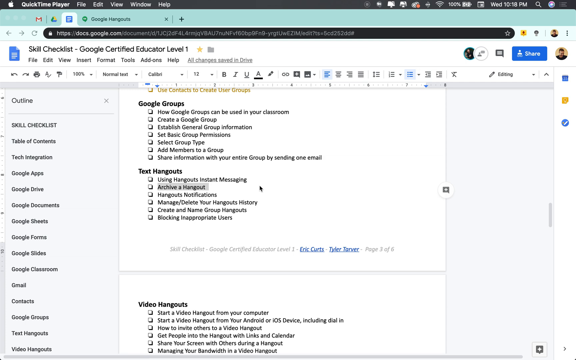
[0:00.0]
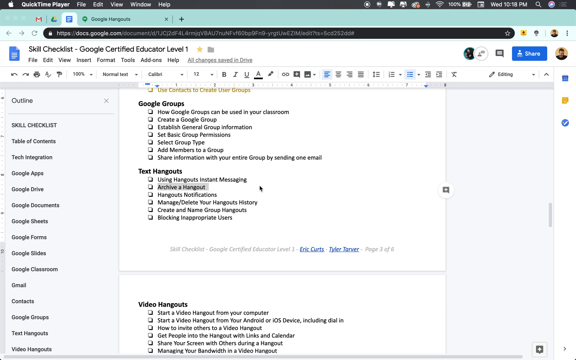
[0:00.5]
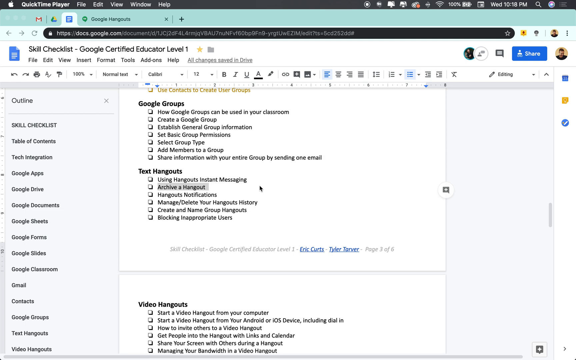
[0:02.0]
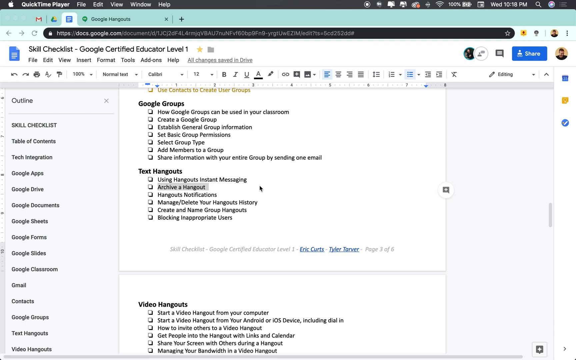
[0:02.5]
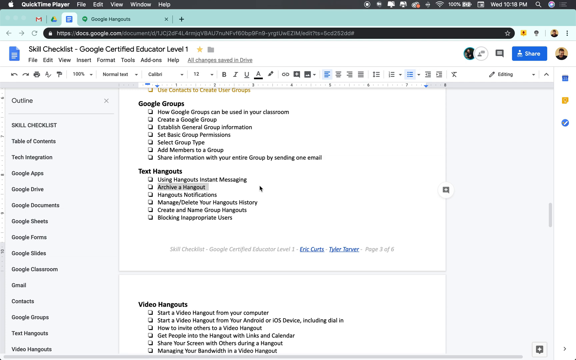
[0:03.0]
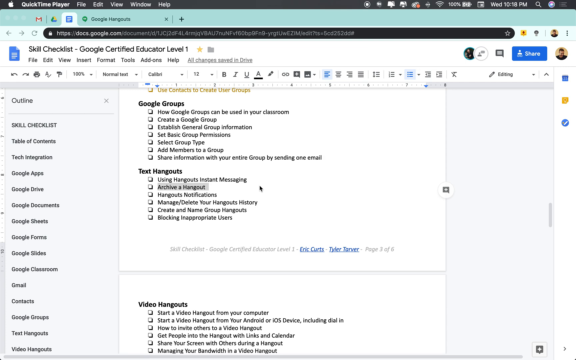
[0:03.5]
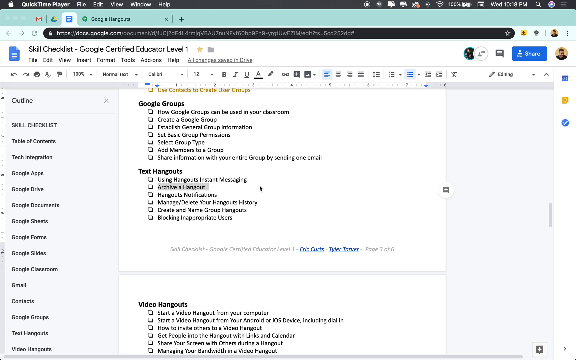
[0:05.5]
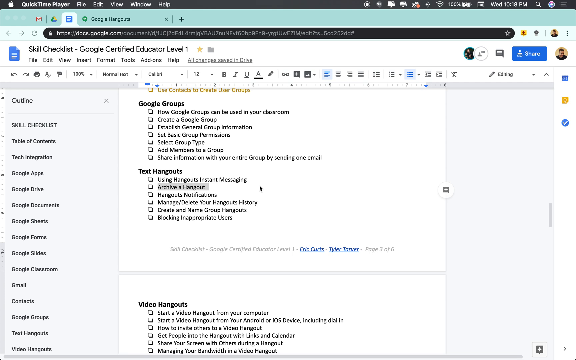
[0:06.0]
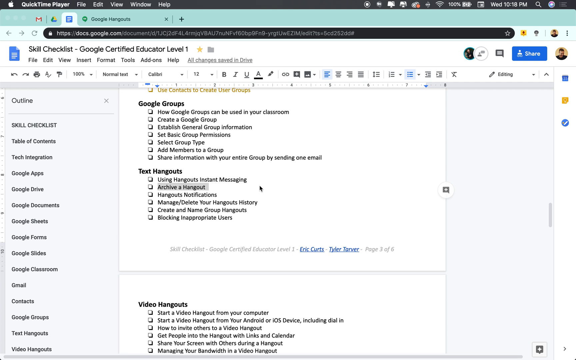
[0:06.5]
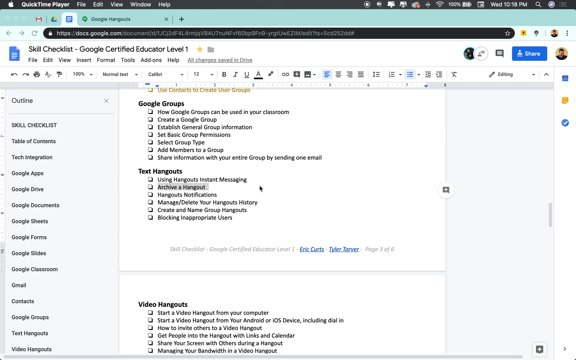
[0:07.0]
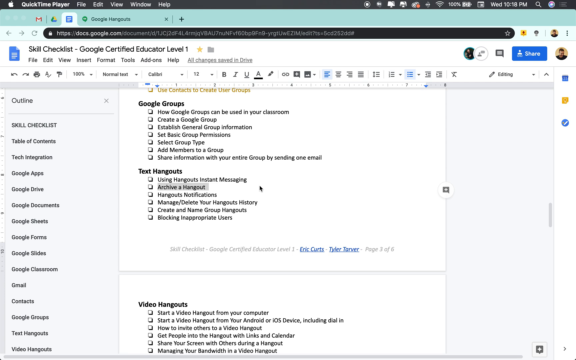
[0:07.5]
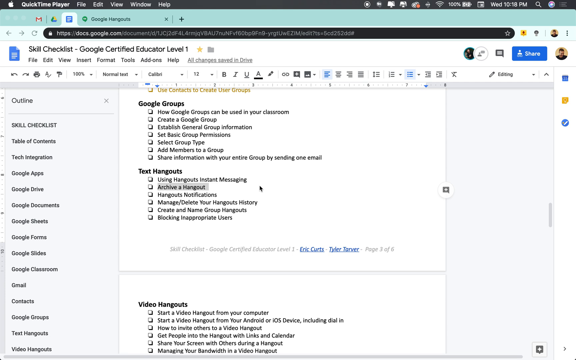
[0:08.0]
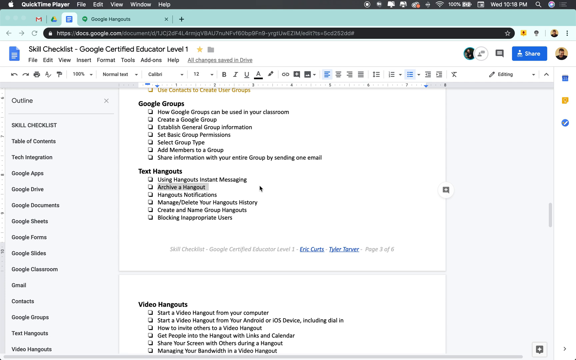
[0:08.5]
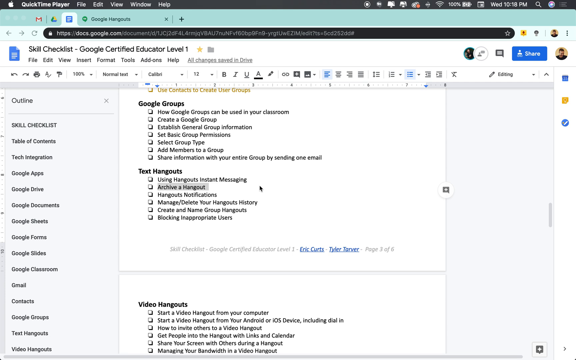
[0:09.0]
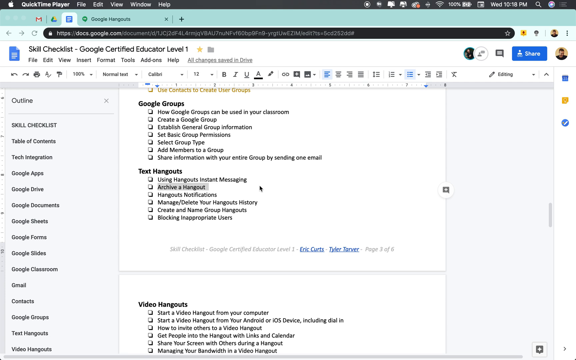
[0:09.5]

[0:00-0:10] A Google Docs page is on screen, with the URL "docs.Google" visible at the top. On the right is a very blurry profile picture that looks like a man's head looking to the right, with short brown hair and a black shirt. Another individual has joined the view, shown by a green circle to the left of the share button. The page is broken down into multiple small sections; the left side reads "outline, skill checklist, table of contents, tech integration, Google apps, Google Drive, Google documents" and so on. The main page holds many small checklists: a "Google groups" section with seven checkboxes below it, then "text hangouts" with six below it, then "video hangouts" with five below it.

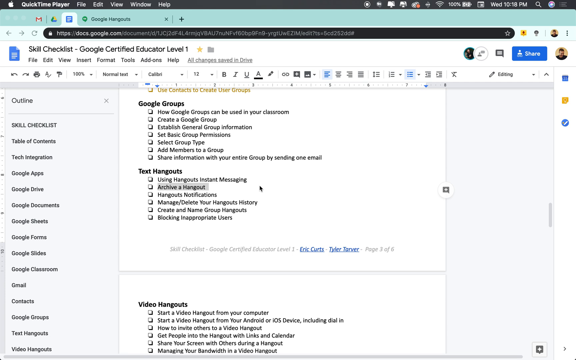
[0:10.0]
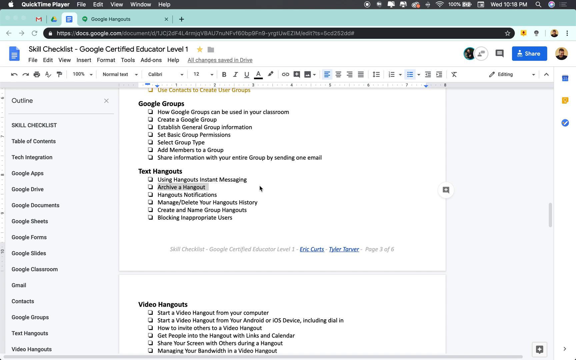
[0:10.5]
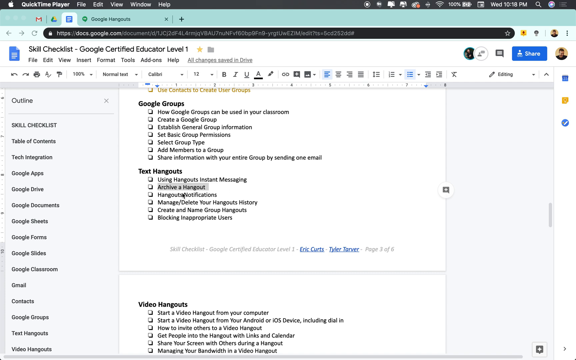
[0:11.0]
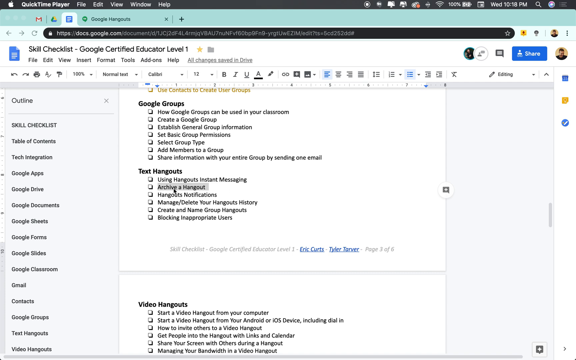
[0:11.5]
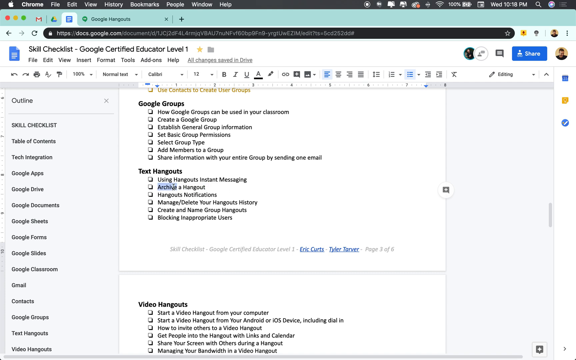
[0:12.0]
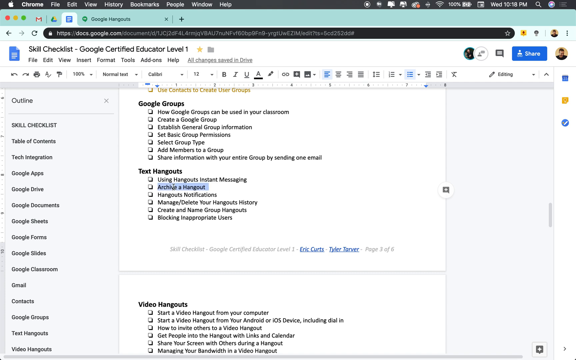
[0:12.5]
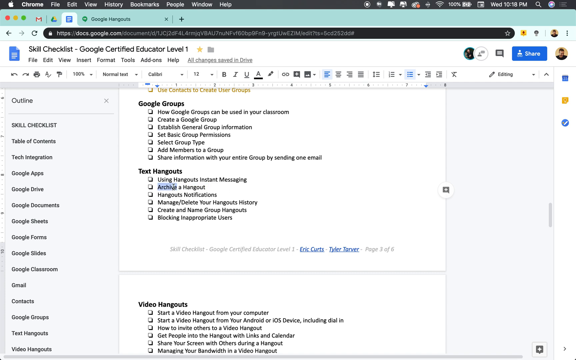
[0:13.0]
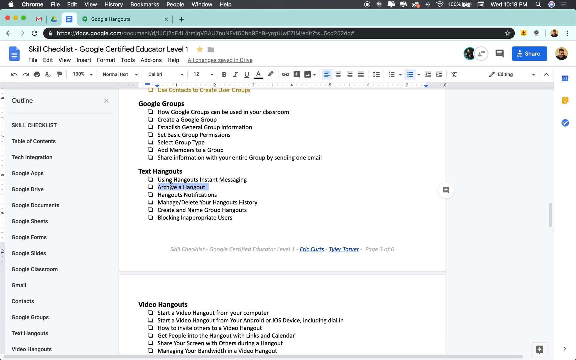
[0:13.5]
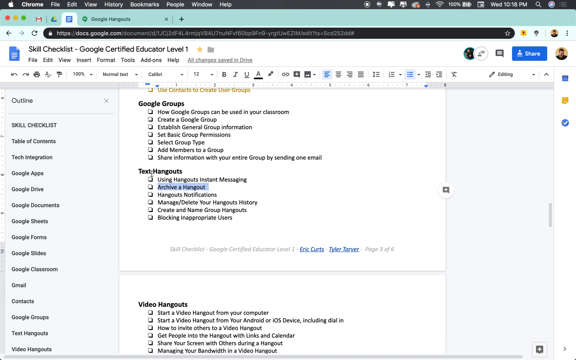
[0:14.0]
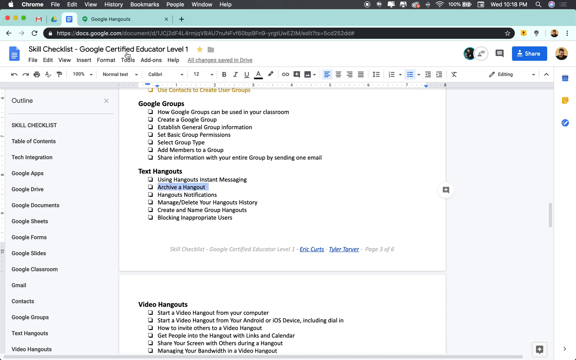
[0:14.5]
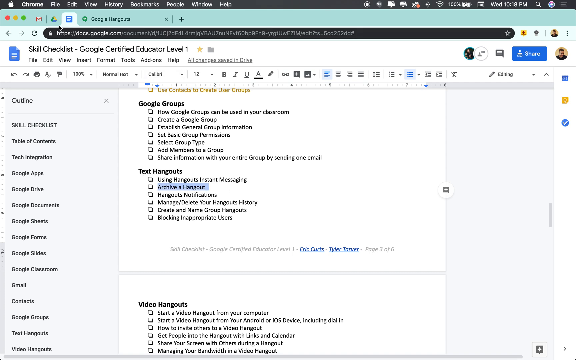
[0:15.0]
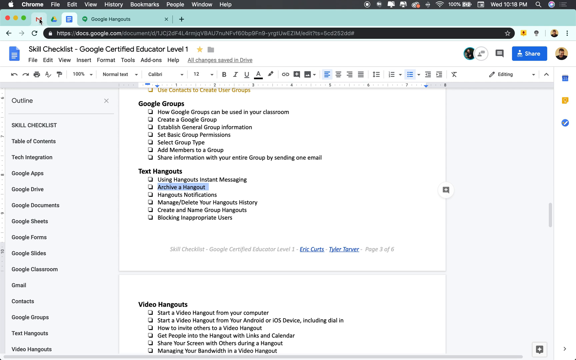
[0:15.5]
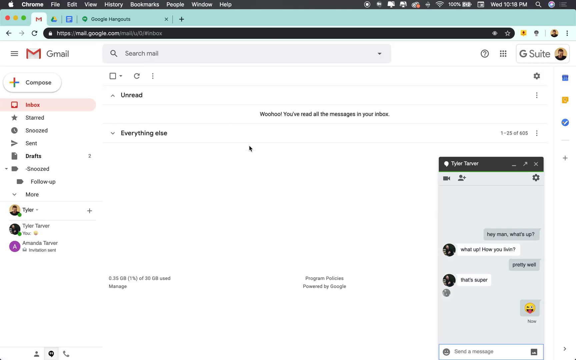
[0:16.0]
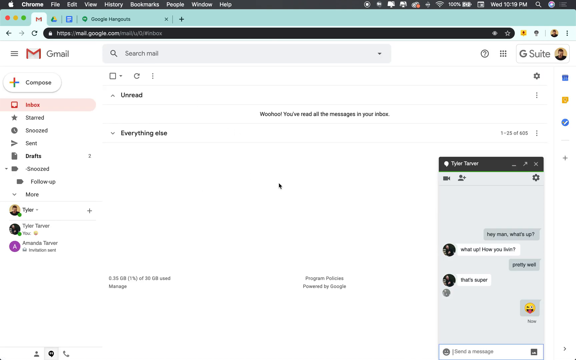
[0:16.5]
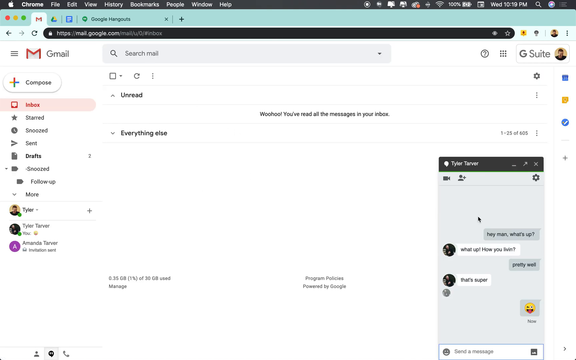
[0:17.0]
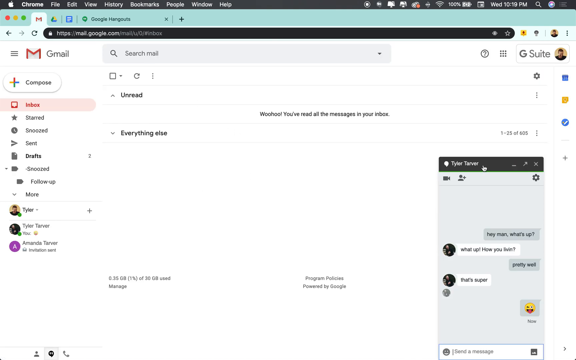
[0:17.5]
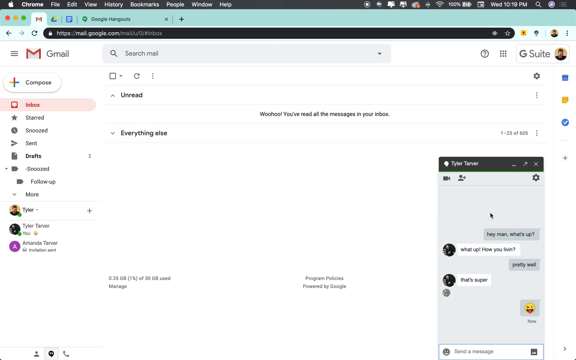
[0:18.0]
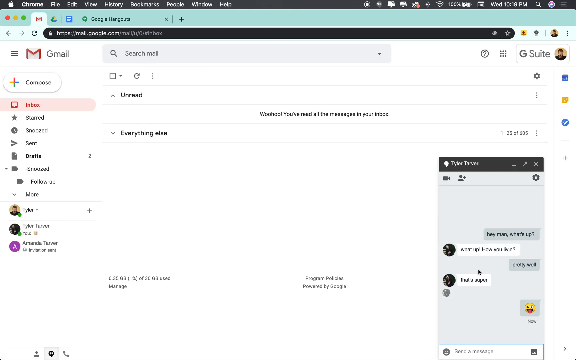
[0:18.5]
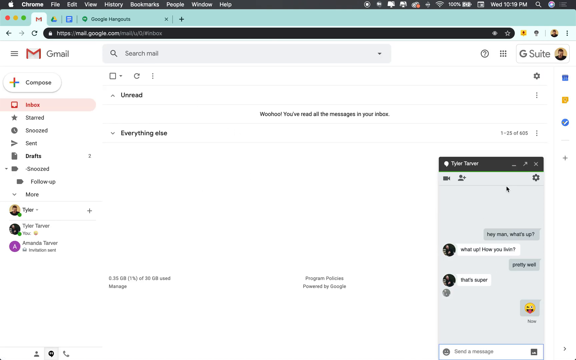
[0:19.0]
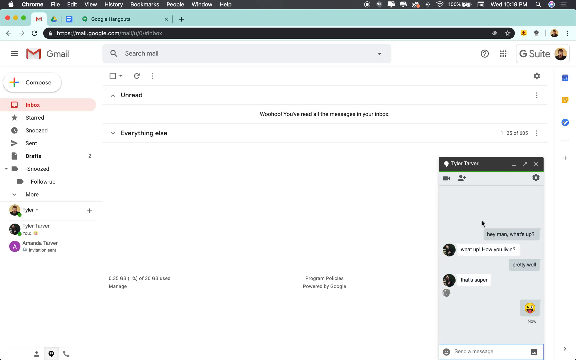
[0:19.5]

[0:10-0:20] The user stays on this part of the document and highlights "archive a hangout." They then move up to the top of the screen and click the Gmail logo, bringing up the emails. The inbox is empty, as if everything has been deleted. At the bottom right is a message conversation with a person named Tyler Tarver, asking him how he is, followed after the pleasantries by a little smiley face. The user then moves the mouse over this area, probably to highlight it as an example of archiving a hangout.